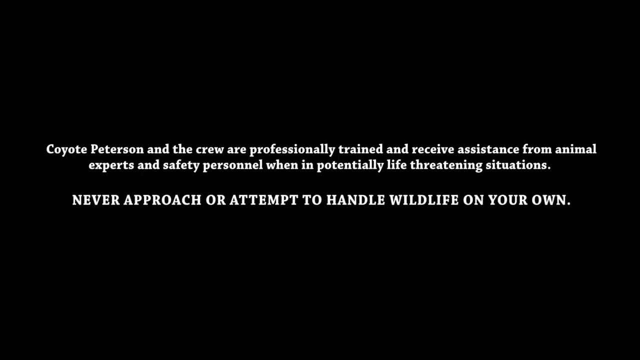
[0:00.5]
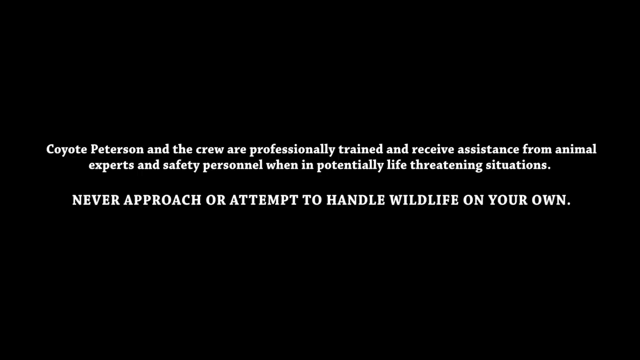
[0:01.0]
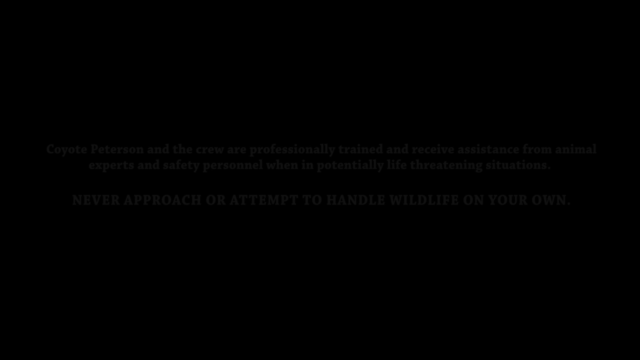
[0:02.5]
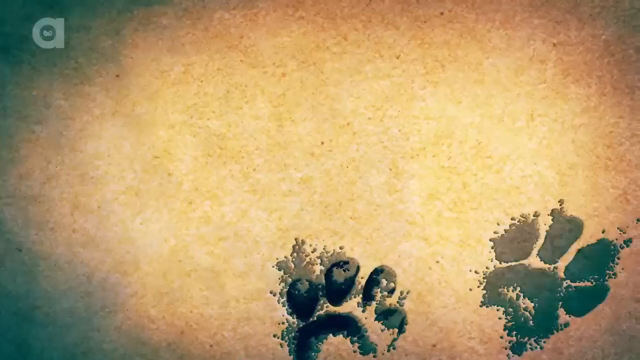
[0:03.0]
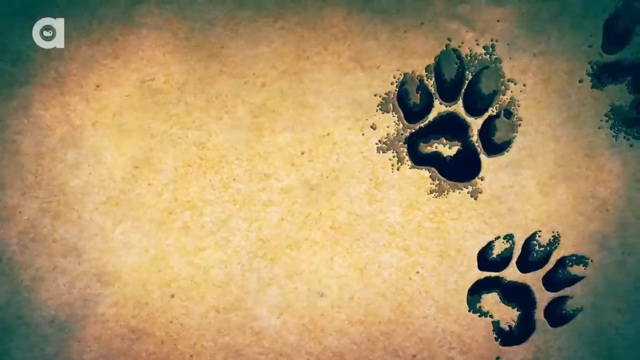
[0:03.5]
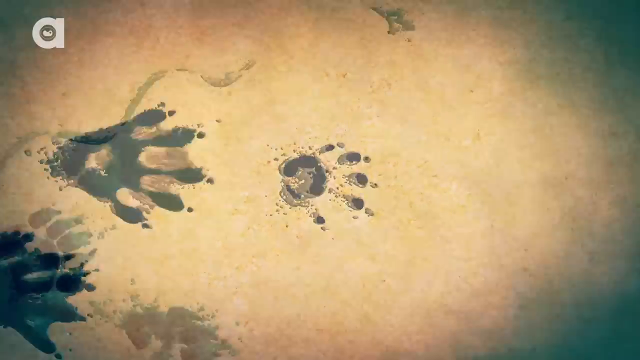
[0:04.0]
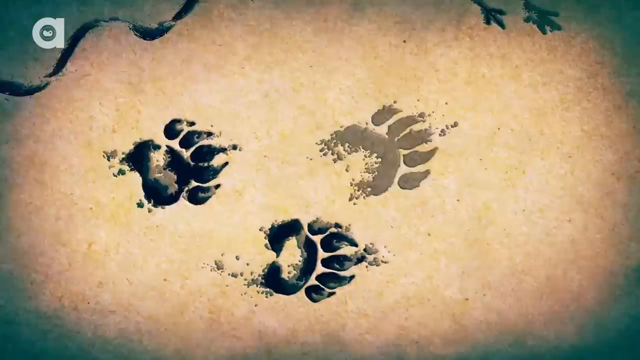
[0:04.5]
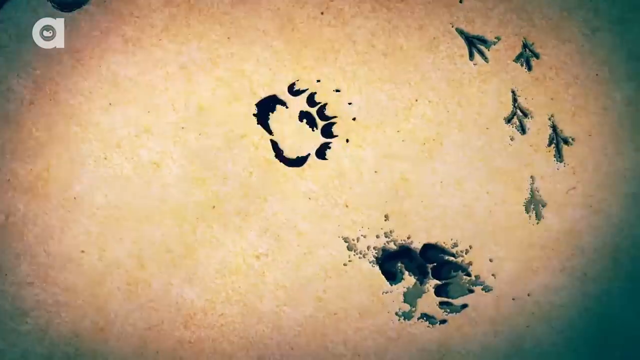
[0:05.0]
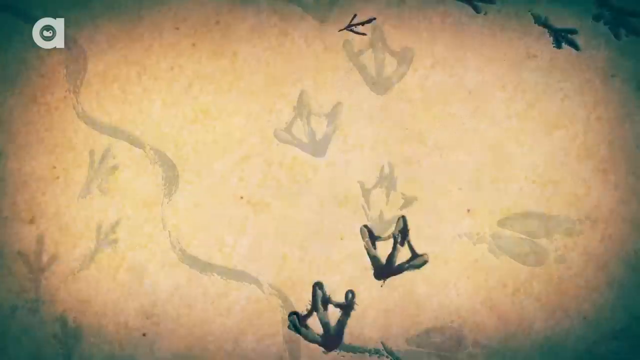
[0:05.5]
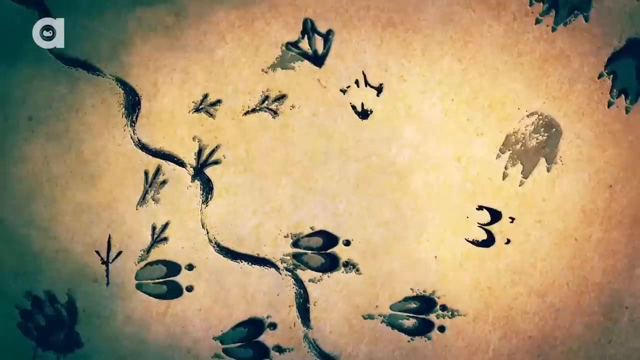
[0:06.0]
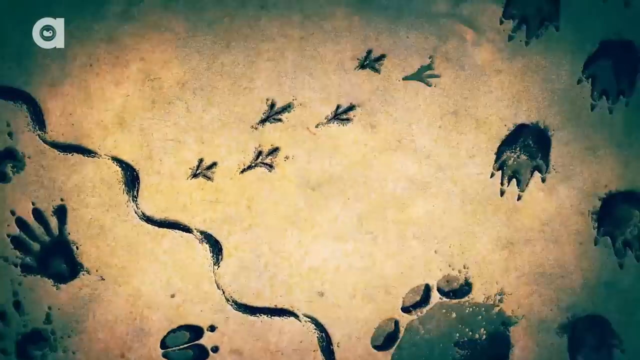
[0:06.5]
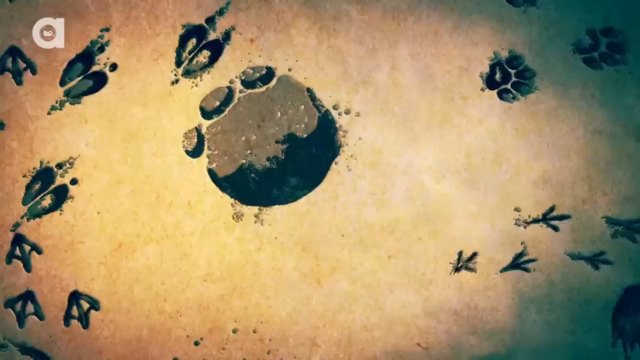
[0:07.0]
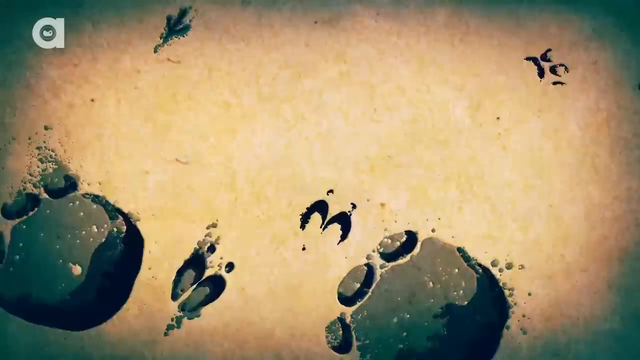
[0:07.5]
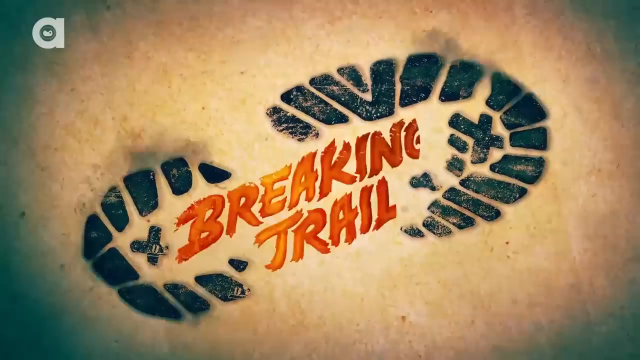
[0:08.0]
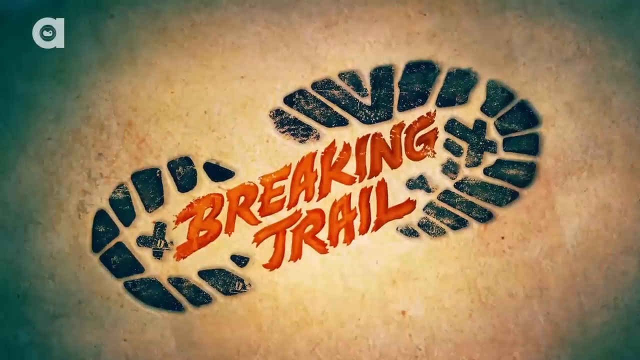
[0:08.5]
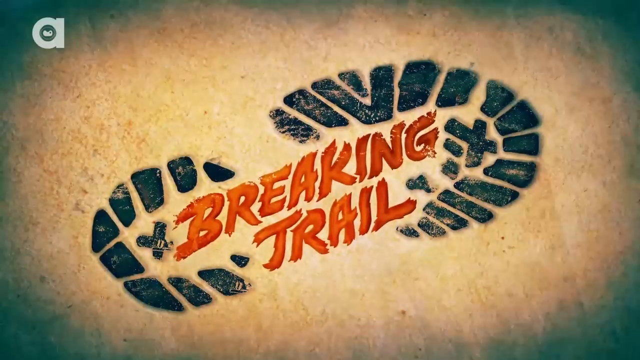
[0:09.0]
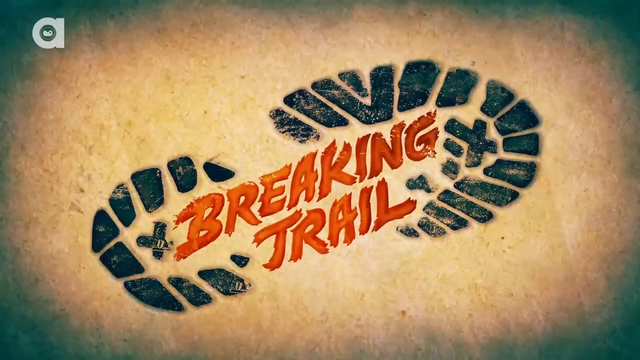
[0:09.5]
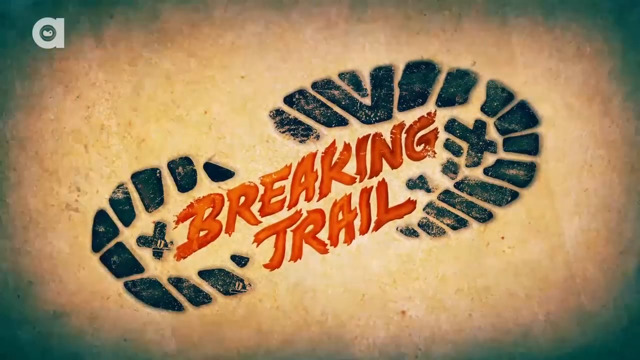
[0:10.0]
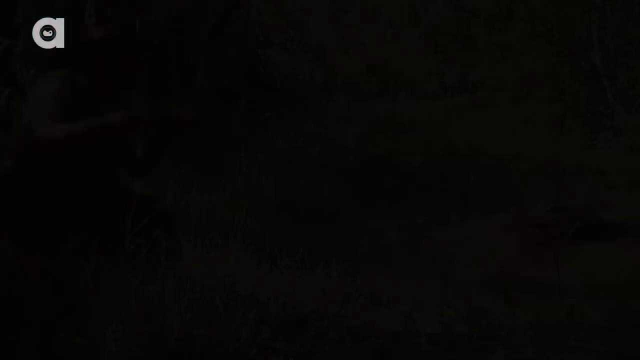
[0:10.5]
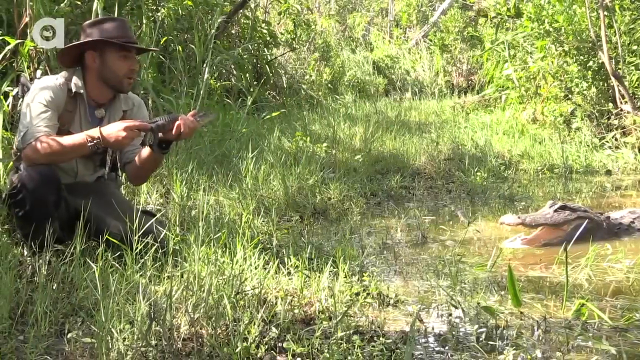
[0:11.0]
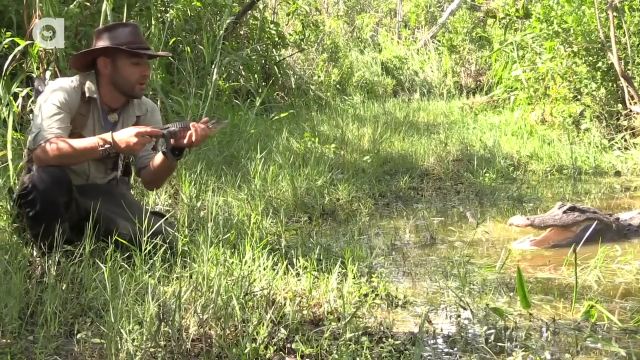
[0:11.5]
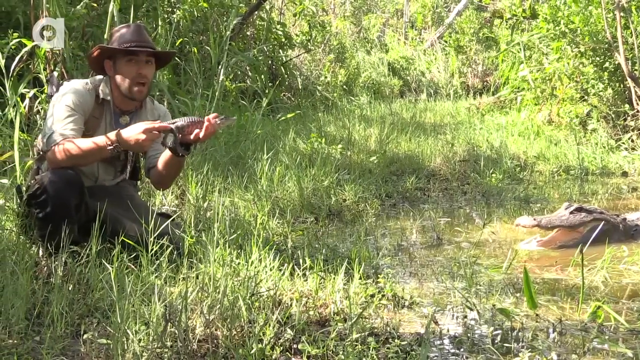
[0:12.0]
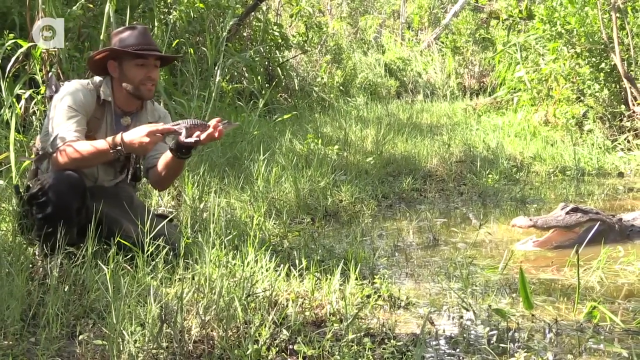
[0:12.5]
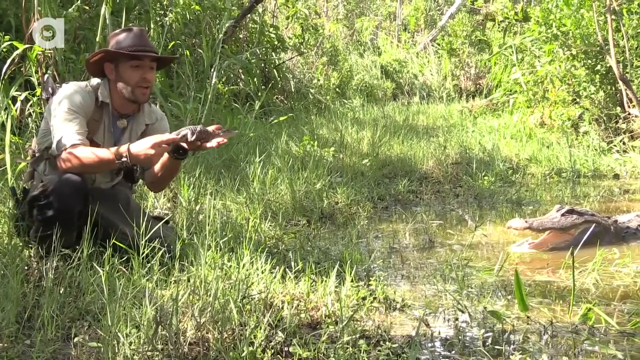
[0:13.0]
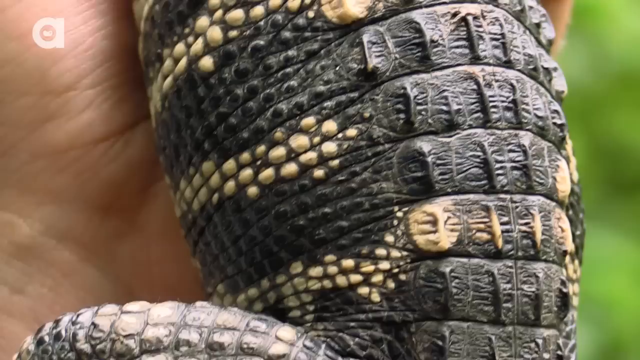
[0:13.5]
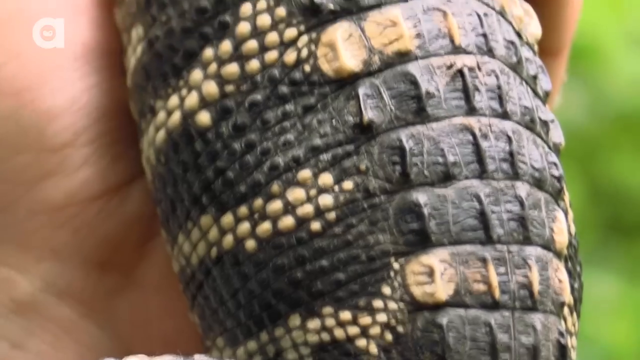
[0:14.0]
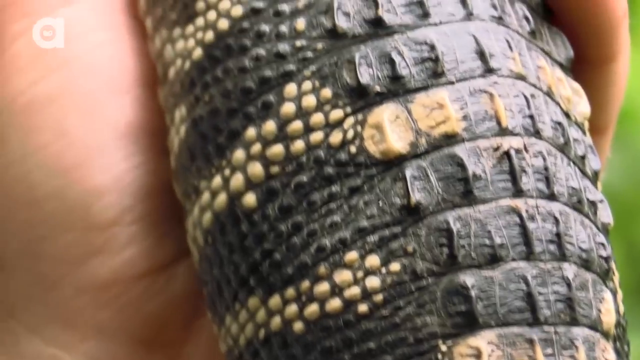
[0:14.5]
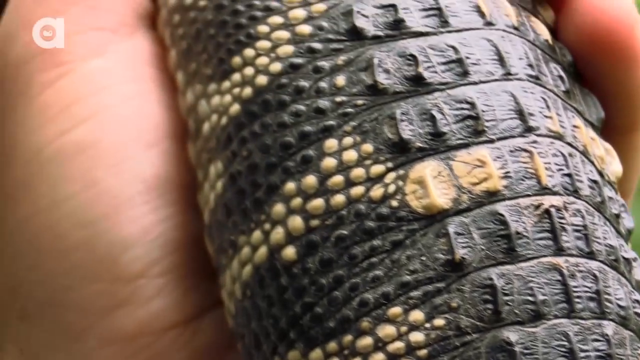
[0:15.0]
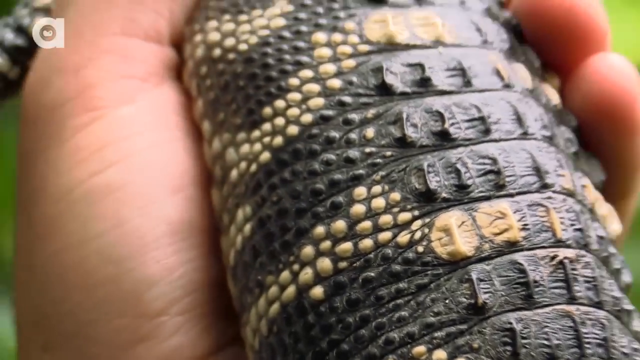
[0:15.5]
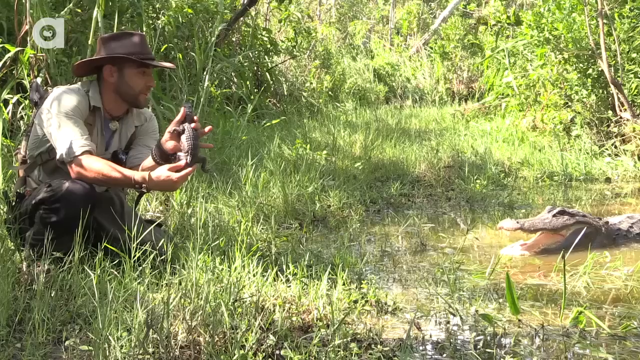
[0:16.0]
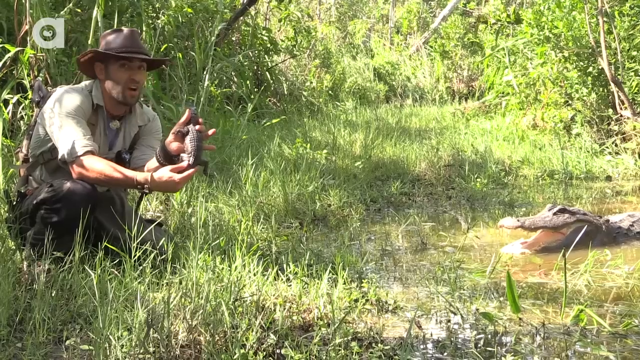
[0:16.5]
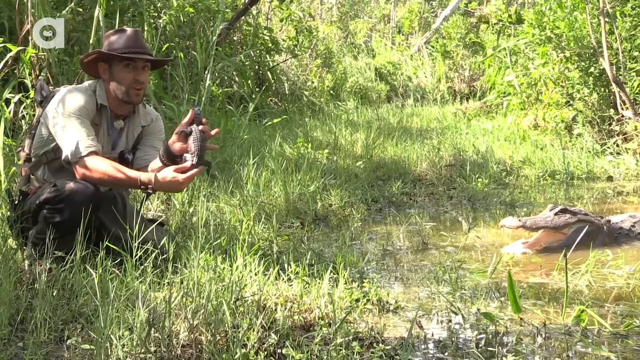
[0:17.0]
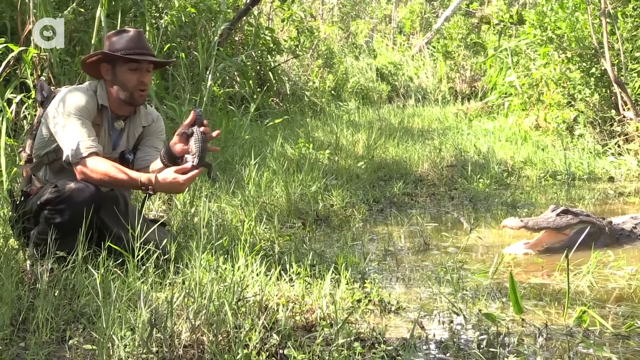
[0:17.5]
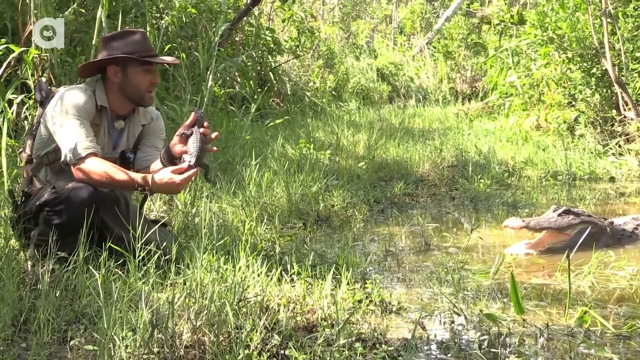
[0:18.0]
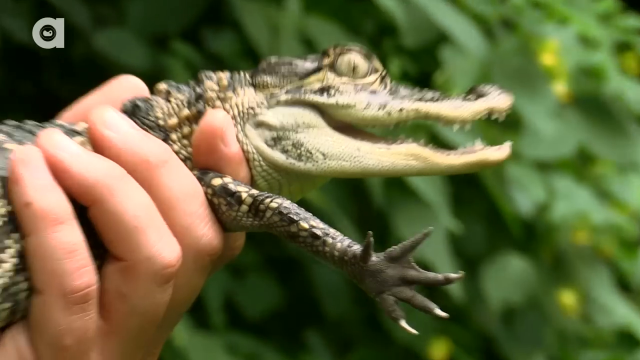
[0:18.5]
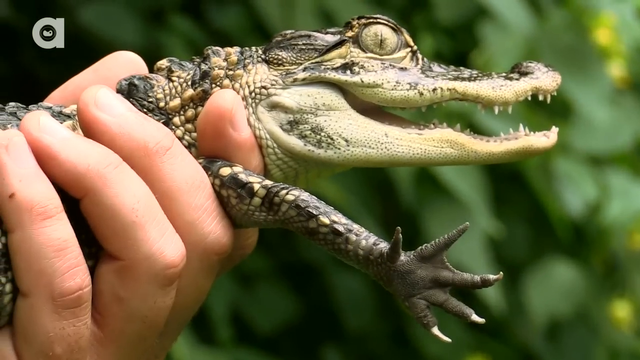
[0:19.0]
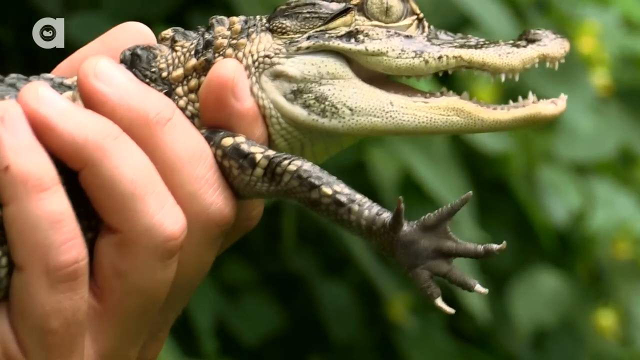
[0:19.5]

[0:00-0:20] The video opens with a warning in white text that reads "Coyote Peterson and the crew are professionally trained and receive assistance from animal experts and safety personnel when in potentially life threatening situations. Never approach or attempt to handle wildlife on your own." A somewhat cartoonish animation follows, showing different types of paw prints through mud, and it stops on a human shoe print in the middle. Red text reads "Breaking Trail." The scene then changes to a man holding what appears to be a baby alligator. He is crouched down on the left. On the right, a crocodile is in the water with its mouth open, presumably the mother of the baby the man is holding.